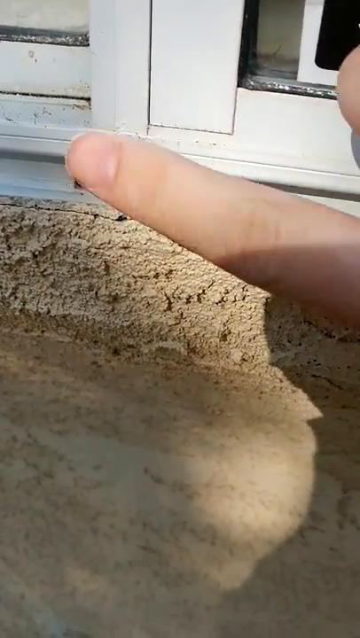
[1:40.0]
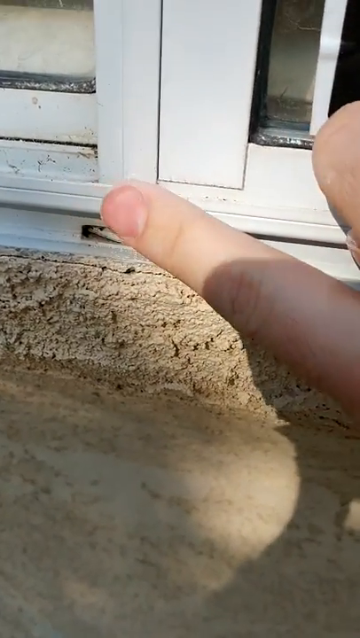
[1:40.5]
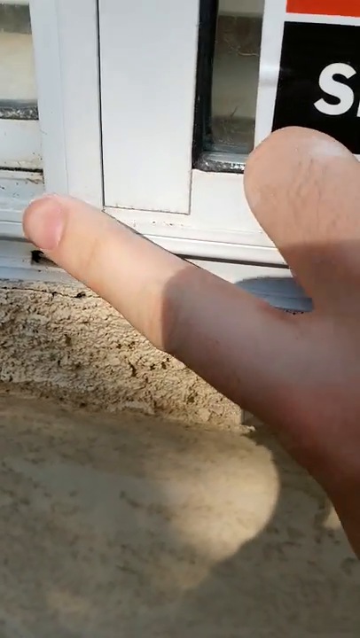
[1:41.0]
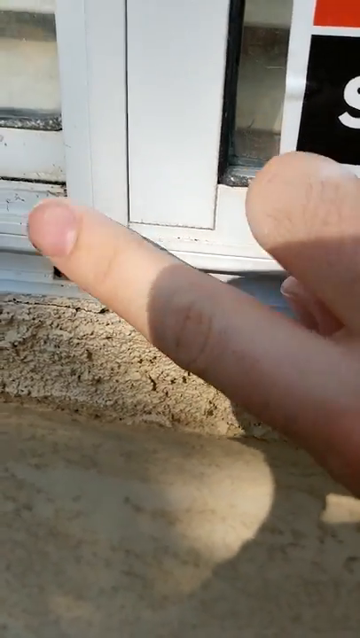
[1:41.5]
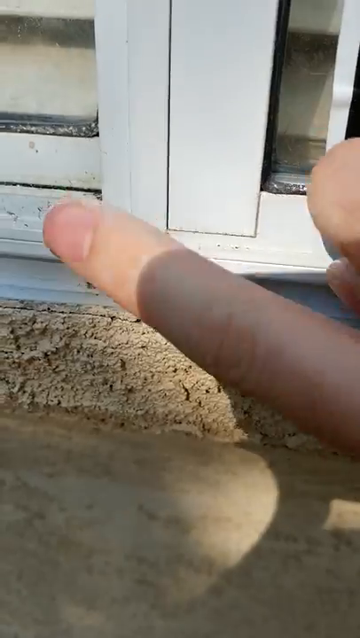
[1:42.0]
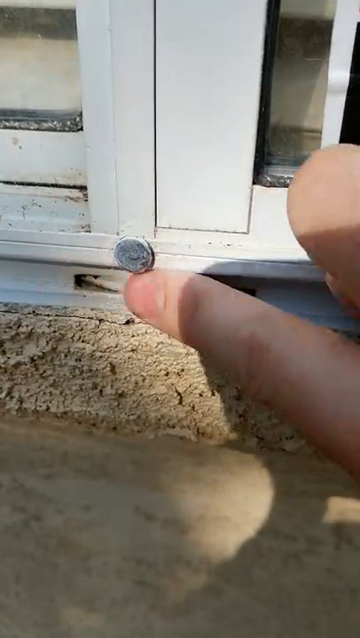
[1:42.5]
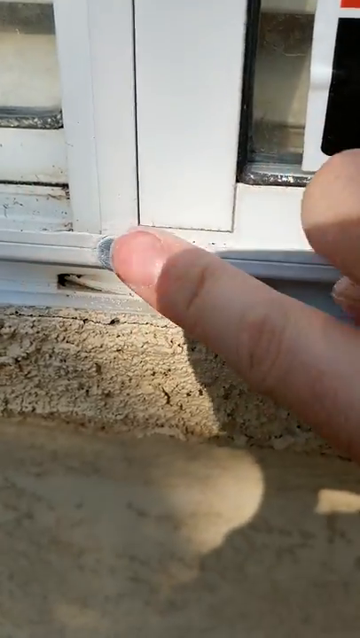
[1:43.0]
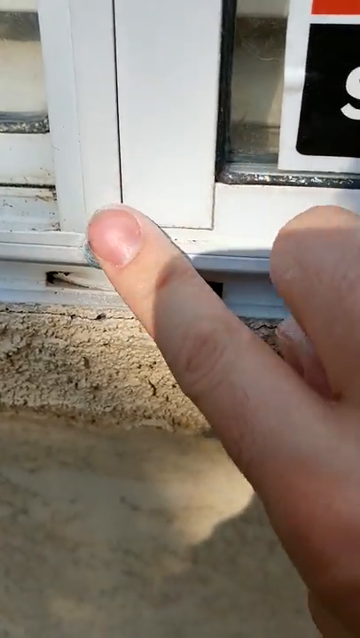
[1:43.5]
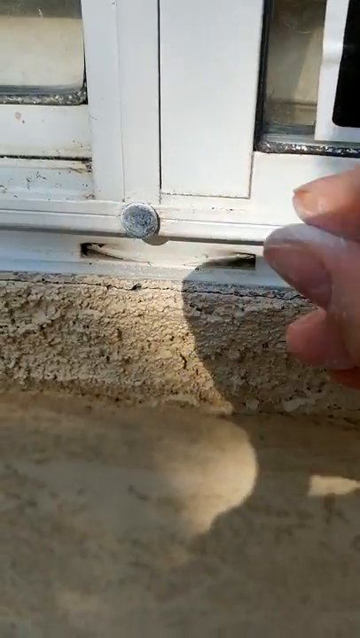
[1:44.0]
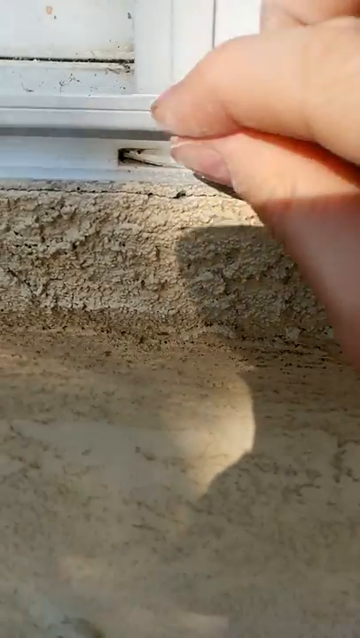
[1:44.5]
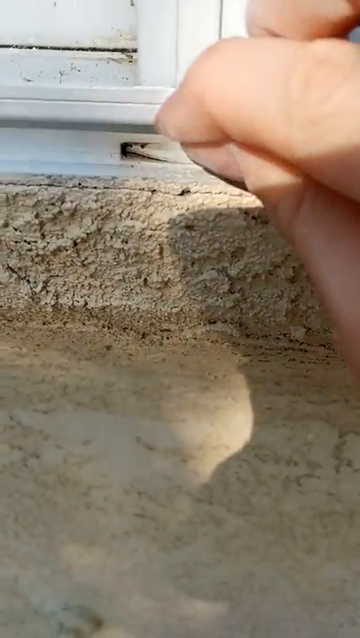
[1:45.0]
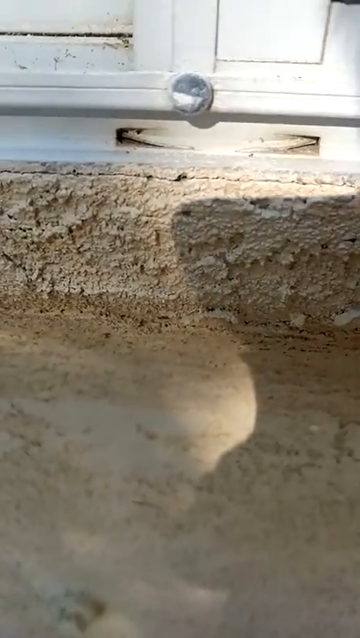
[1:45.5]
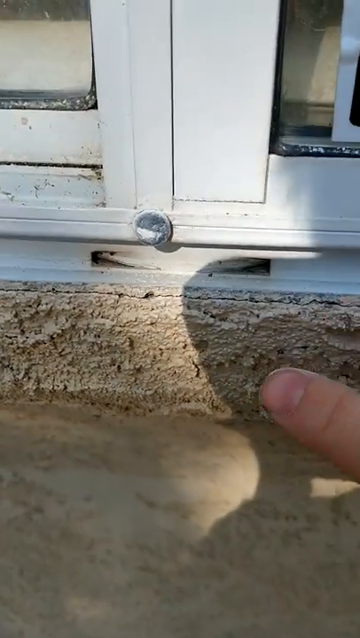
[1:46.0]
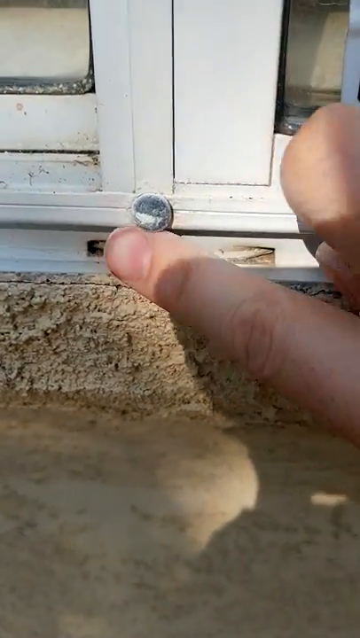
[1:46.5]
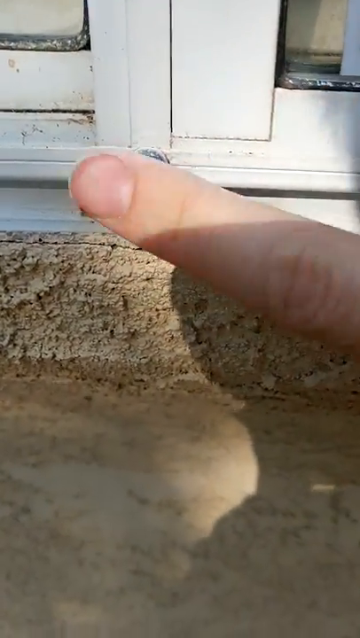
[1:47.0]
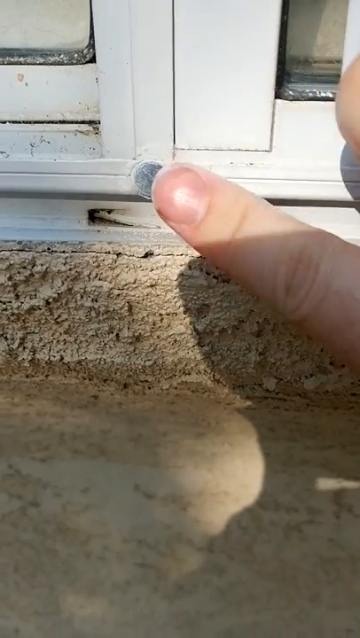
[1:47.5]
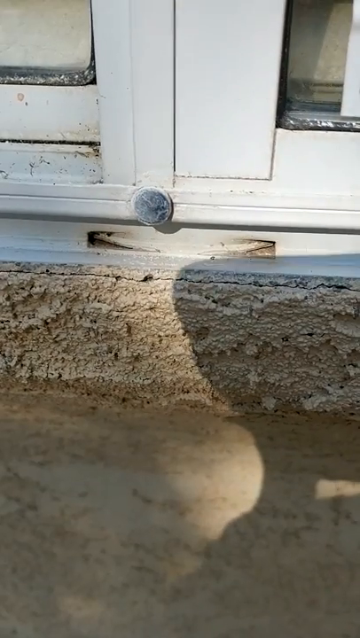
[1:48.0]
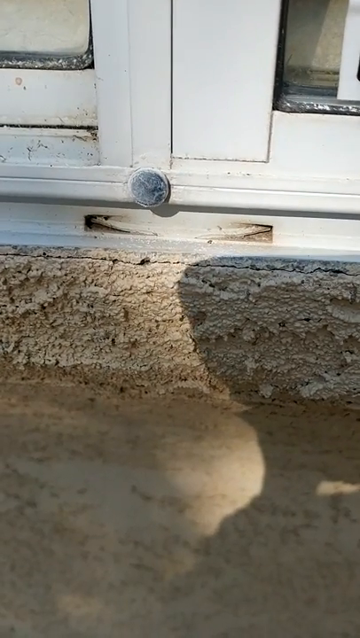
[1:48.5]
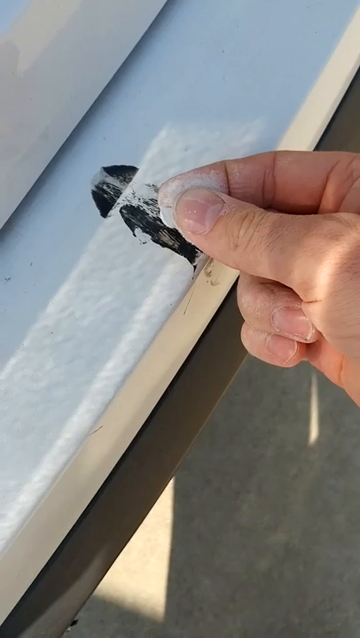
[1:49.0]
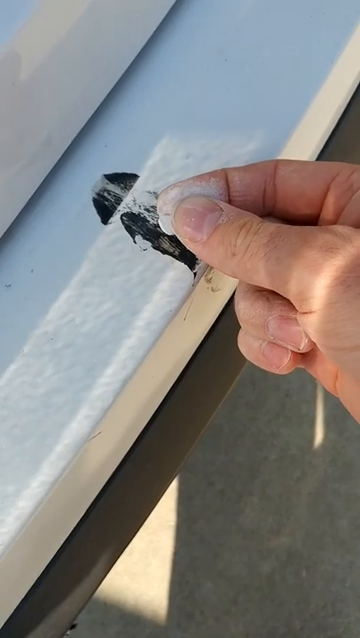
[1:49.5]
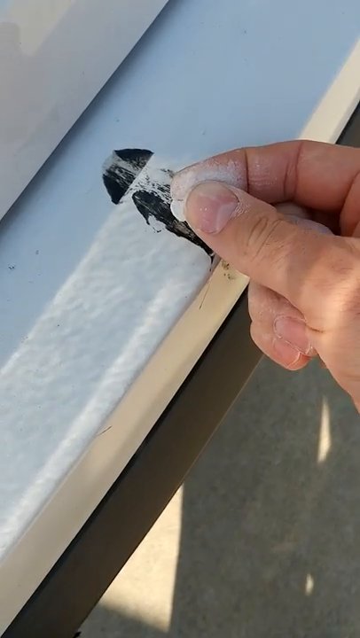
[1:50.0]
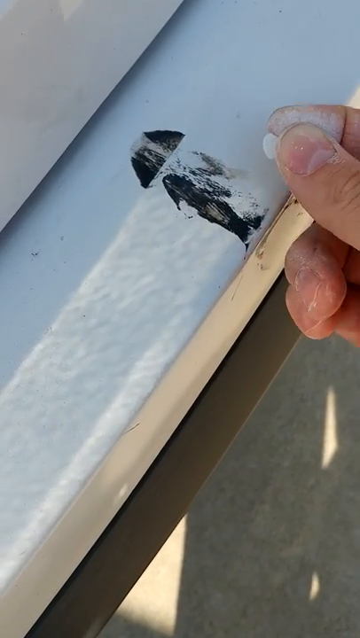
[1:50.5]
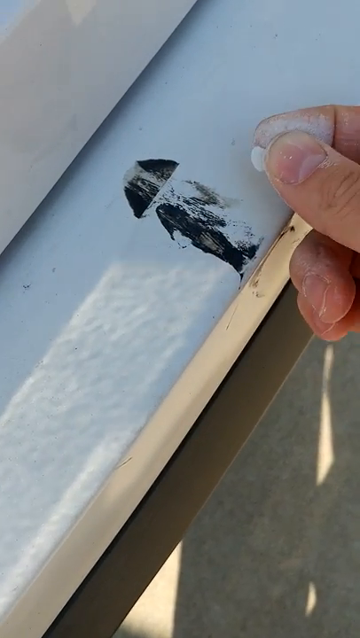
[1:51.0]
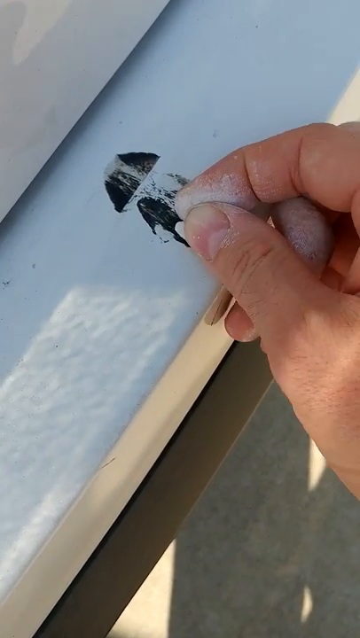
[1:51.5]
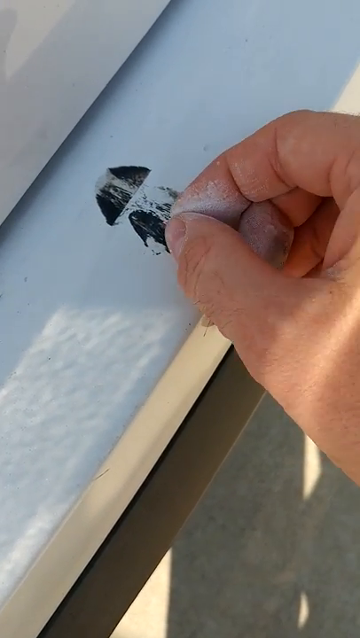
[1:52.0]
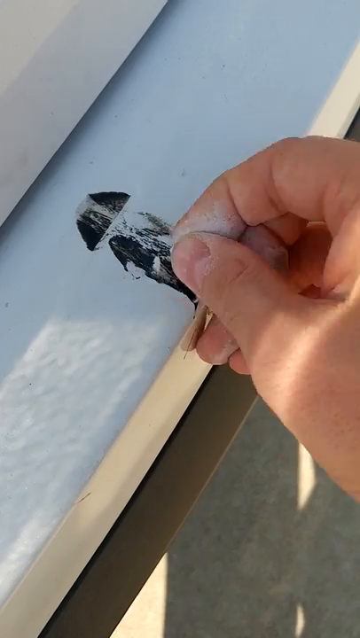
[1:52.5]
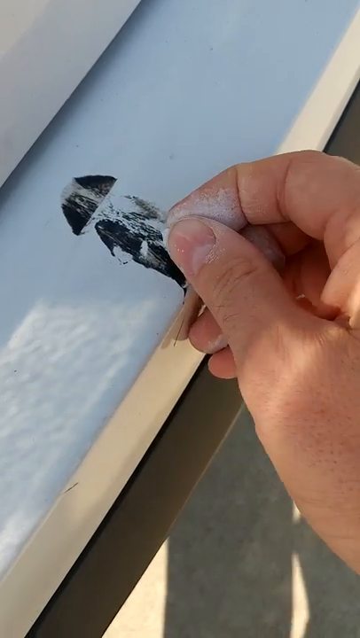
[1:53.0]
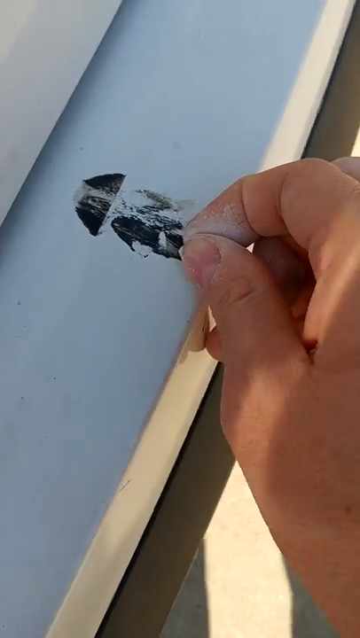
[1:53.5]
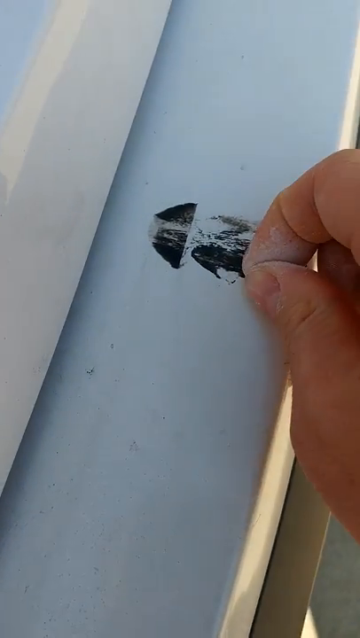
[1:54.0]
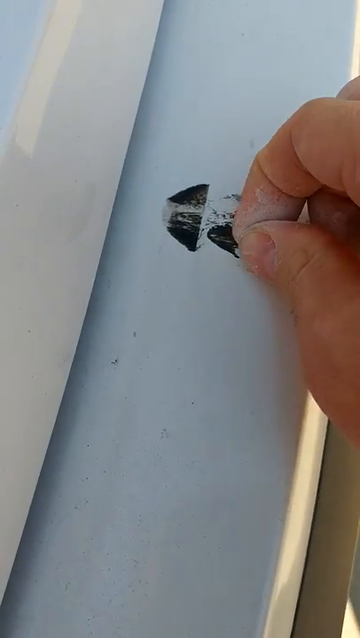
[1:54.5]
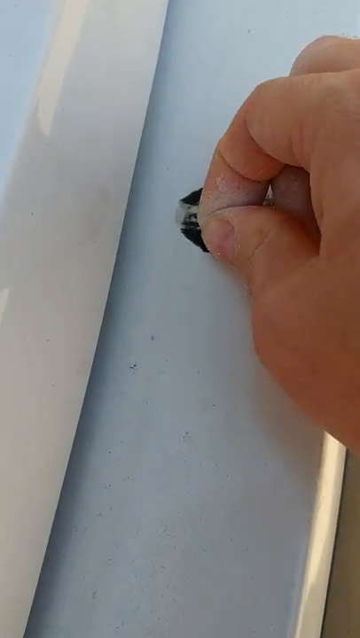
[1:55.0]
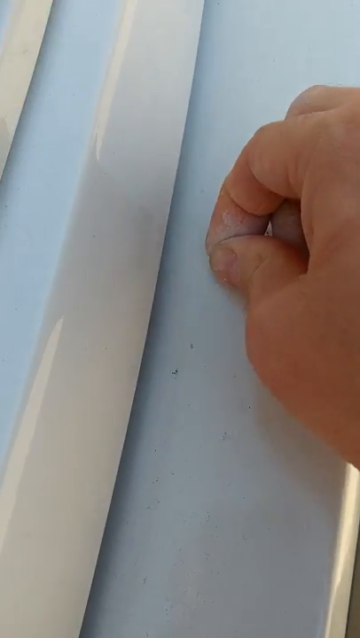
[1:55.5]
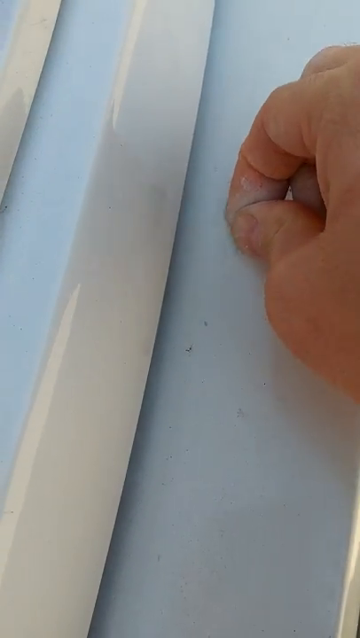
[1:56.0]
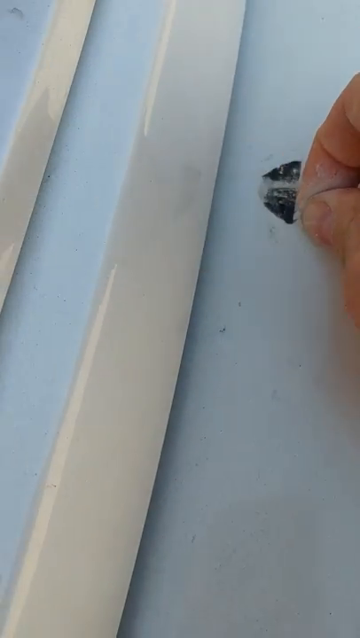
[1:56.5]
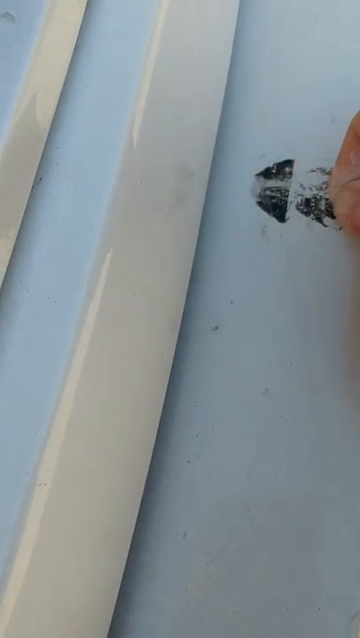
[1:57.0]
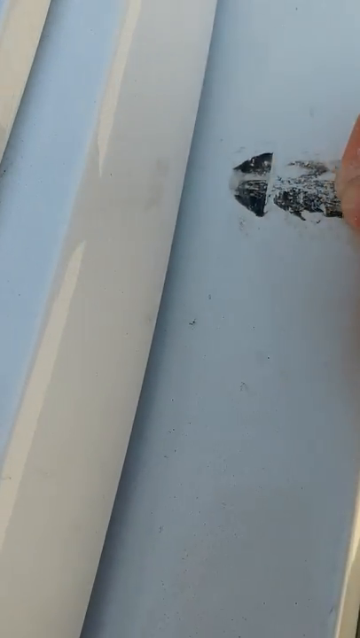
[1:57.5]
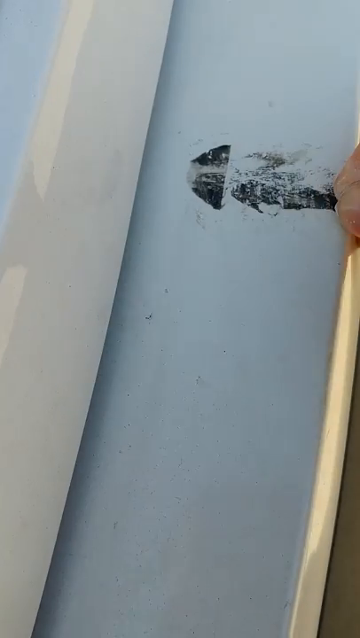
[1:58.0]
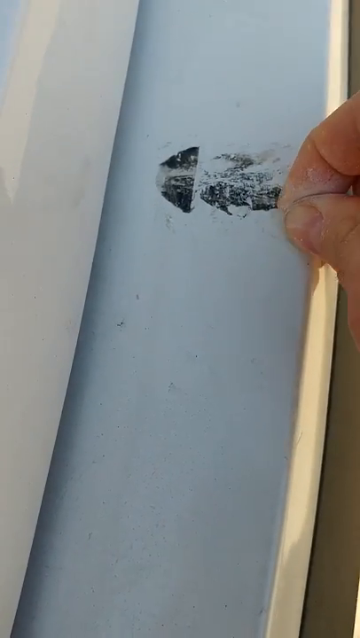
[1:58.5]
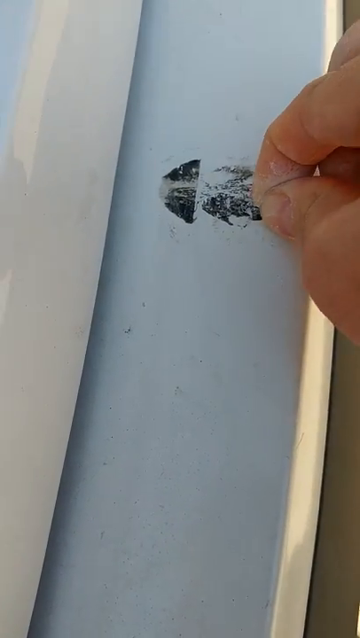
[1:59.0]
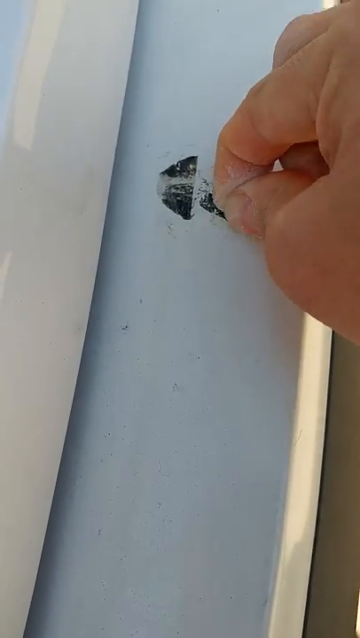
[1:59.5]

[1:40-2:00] Outside, there is what looks to be a doorstop or some other object on the wall, and the person points at it. They rub chalk on it to try to make it look like everything else, but it does not really do anything. They also go after some tar or something that has spilled on the door and use chalk on that too.